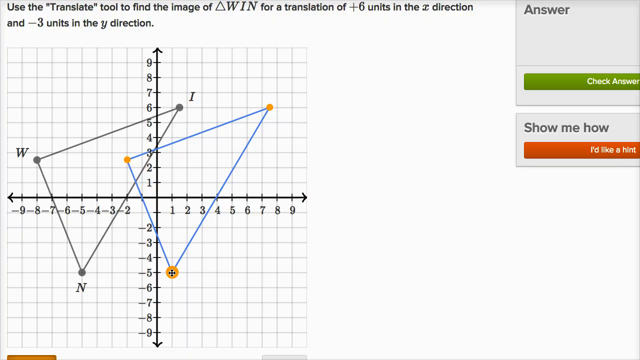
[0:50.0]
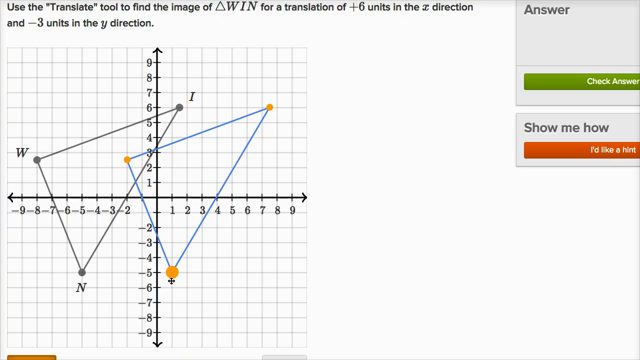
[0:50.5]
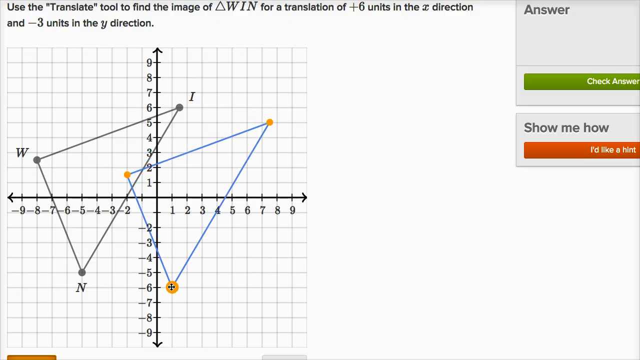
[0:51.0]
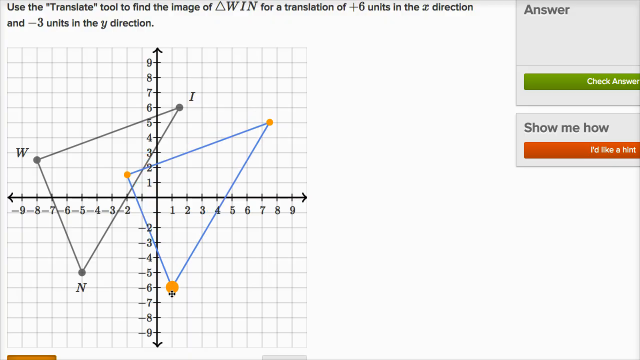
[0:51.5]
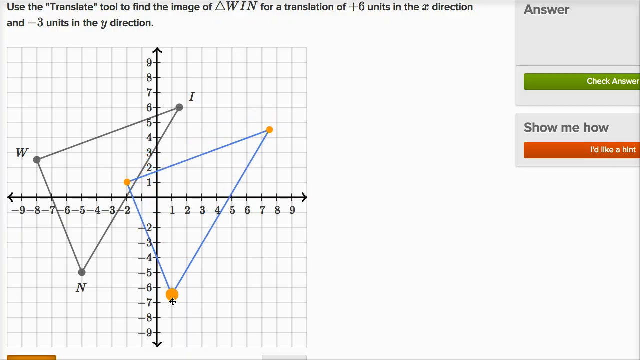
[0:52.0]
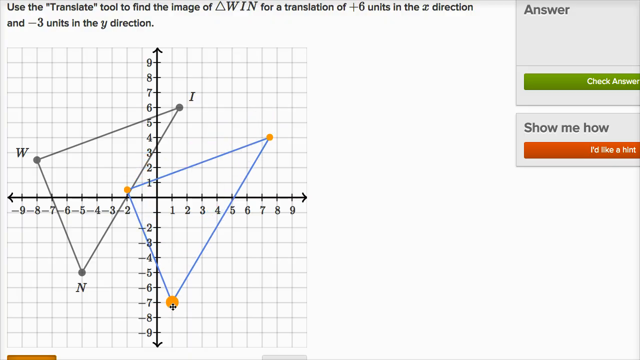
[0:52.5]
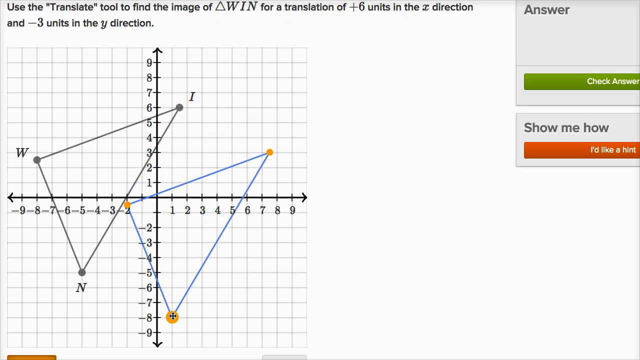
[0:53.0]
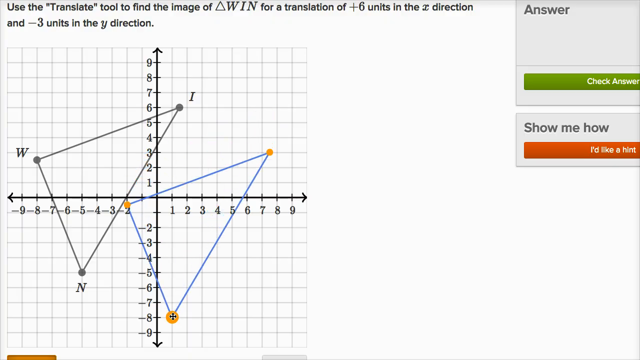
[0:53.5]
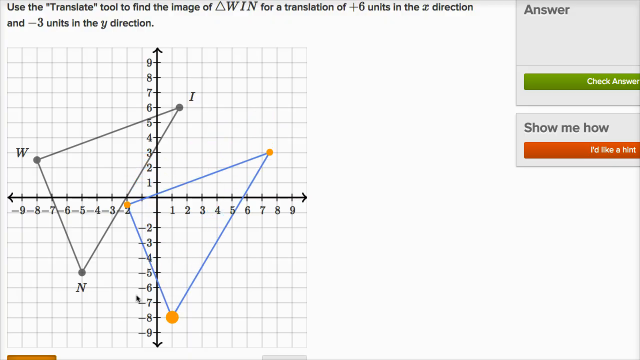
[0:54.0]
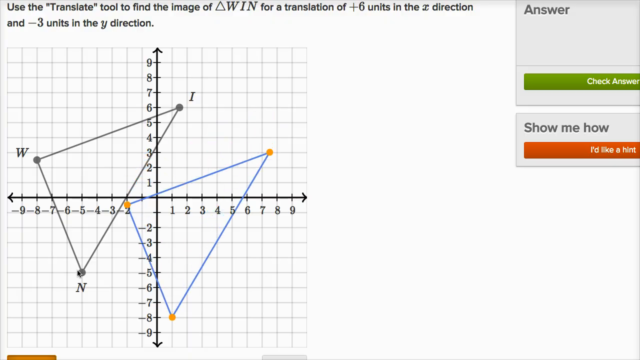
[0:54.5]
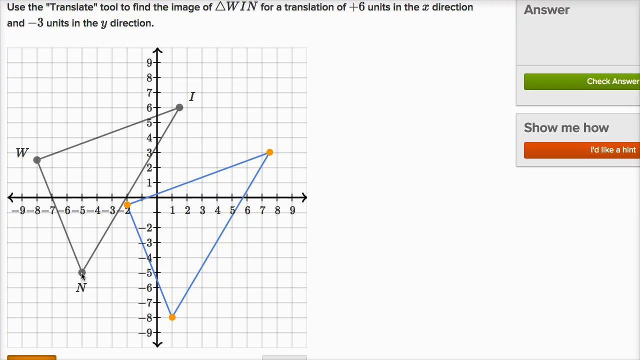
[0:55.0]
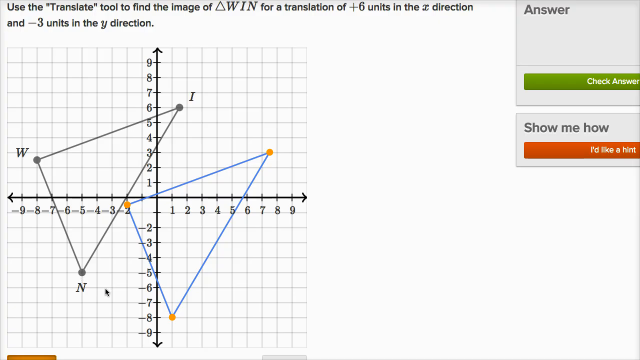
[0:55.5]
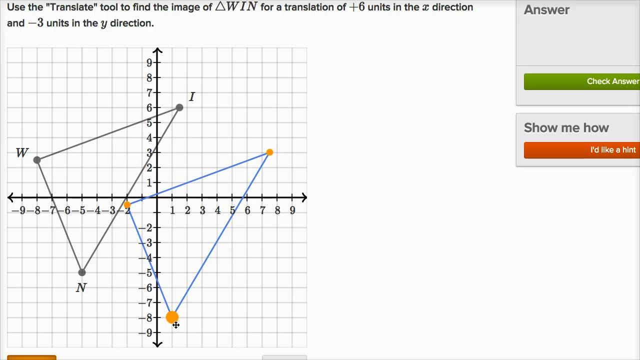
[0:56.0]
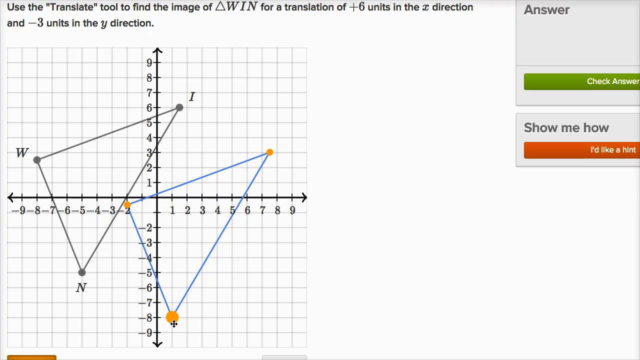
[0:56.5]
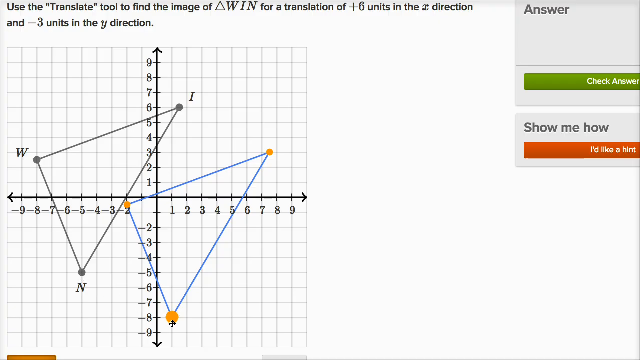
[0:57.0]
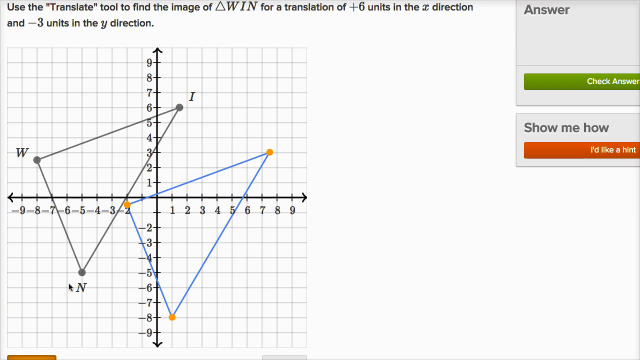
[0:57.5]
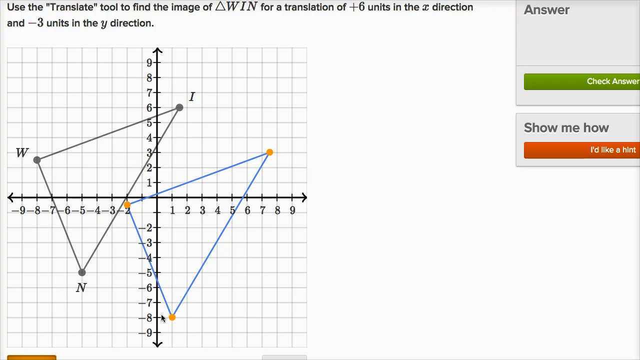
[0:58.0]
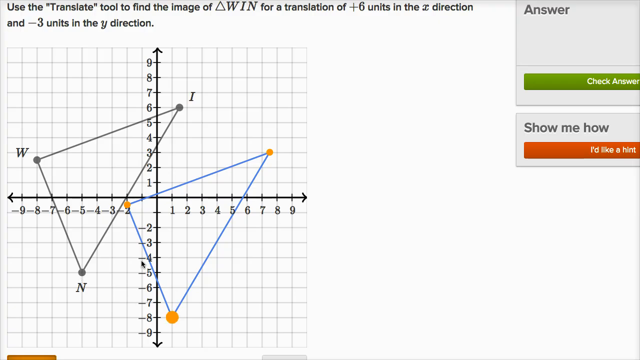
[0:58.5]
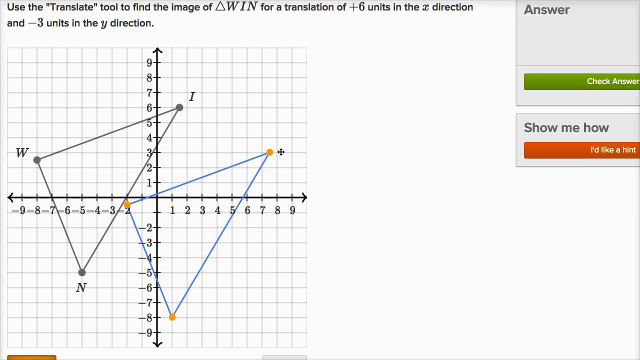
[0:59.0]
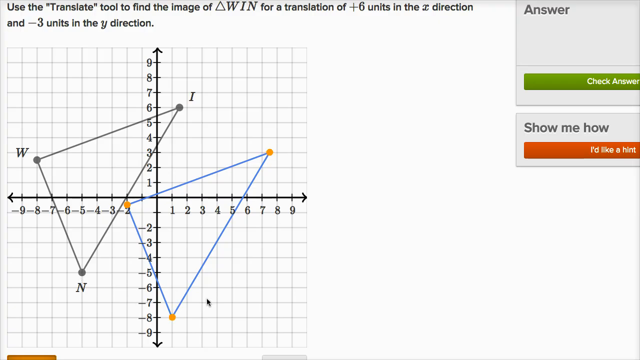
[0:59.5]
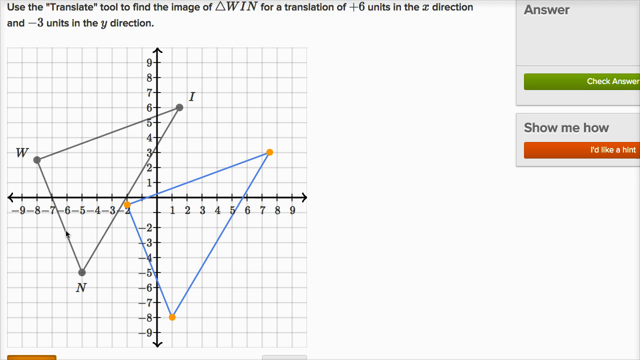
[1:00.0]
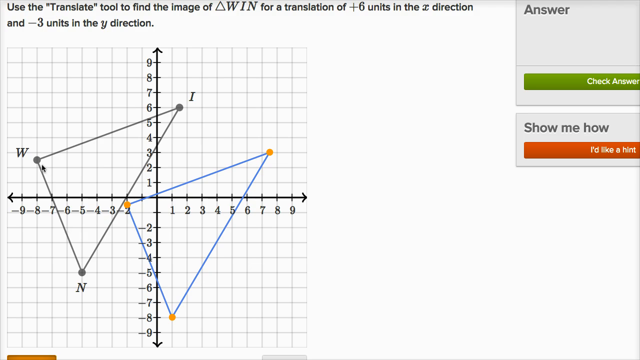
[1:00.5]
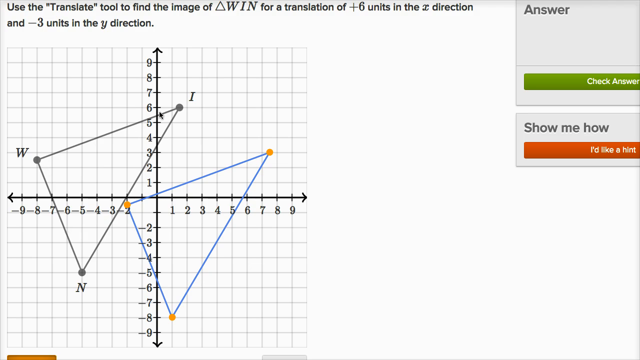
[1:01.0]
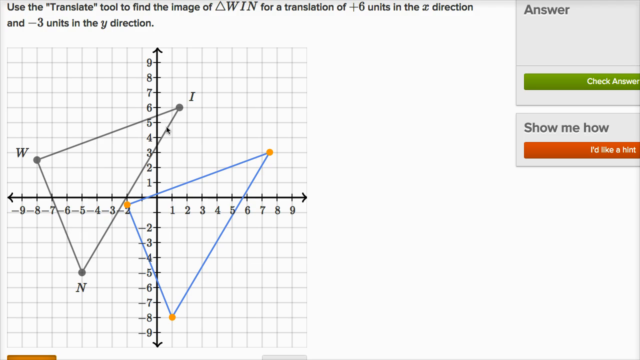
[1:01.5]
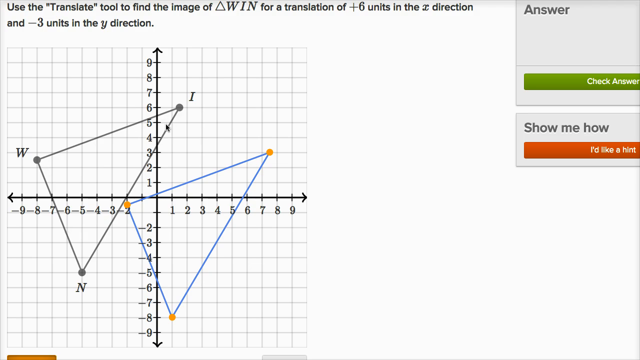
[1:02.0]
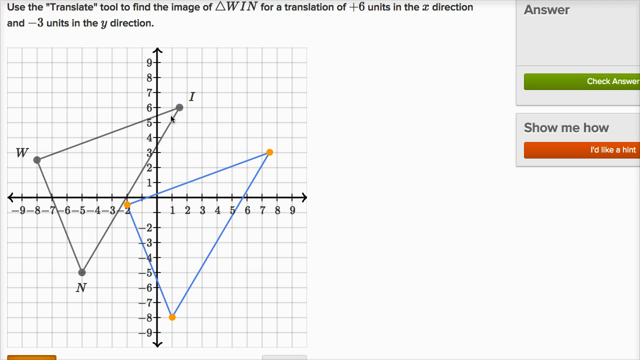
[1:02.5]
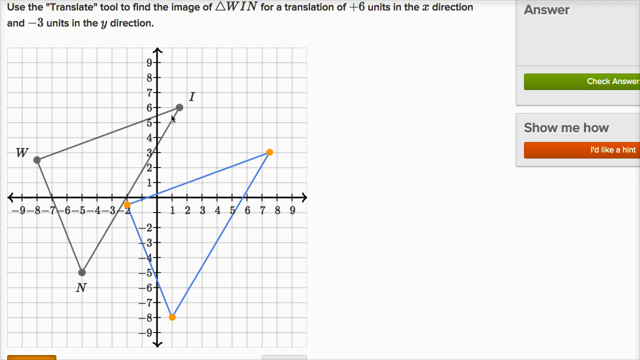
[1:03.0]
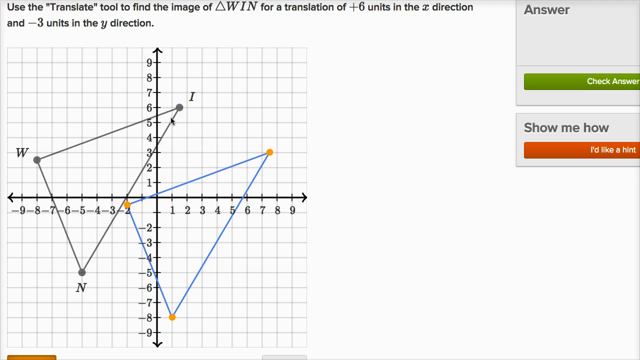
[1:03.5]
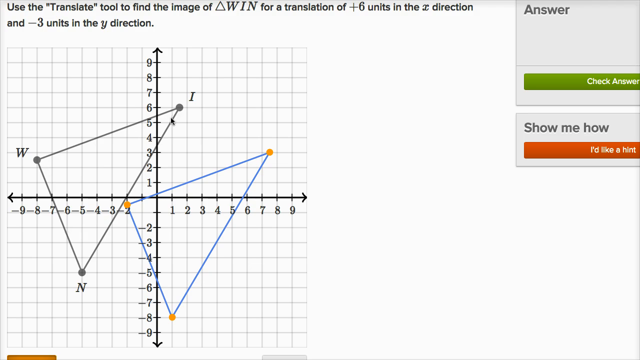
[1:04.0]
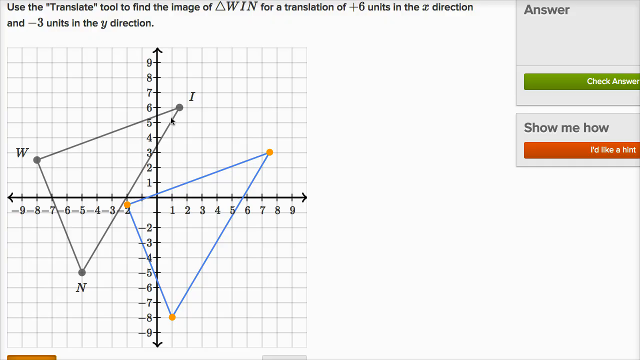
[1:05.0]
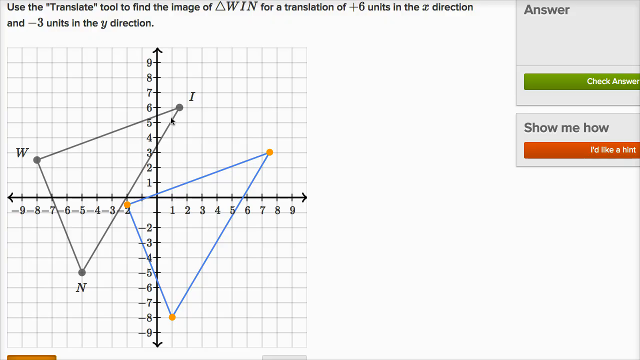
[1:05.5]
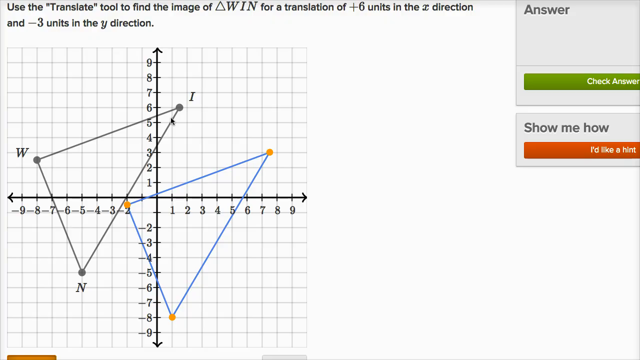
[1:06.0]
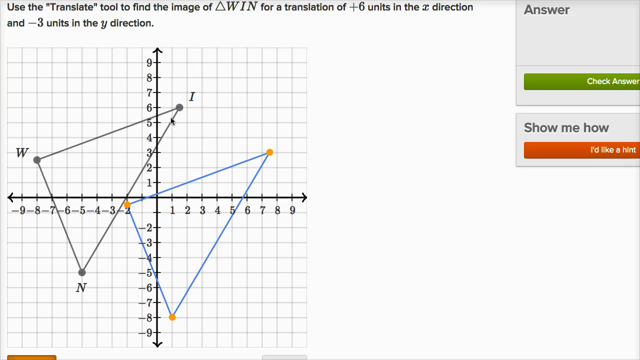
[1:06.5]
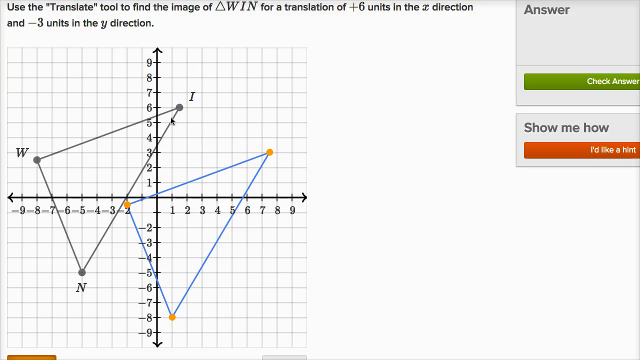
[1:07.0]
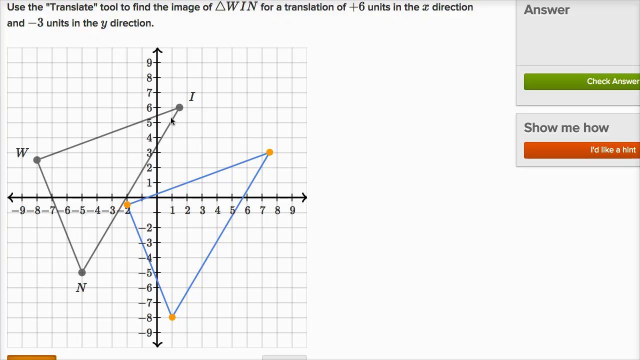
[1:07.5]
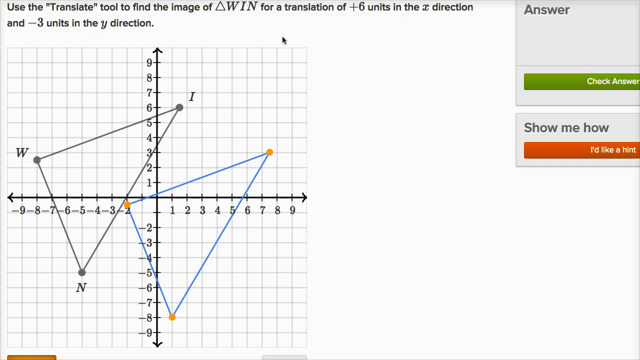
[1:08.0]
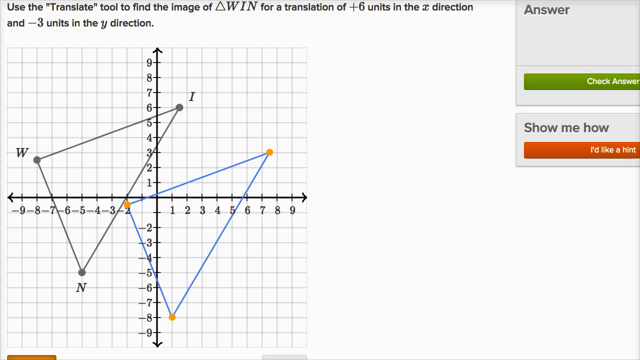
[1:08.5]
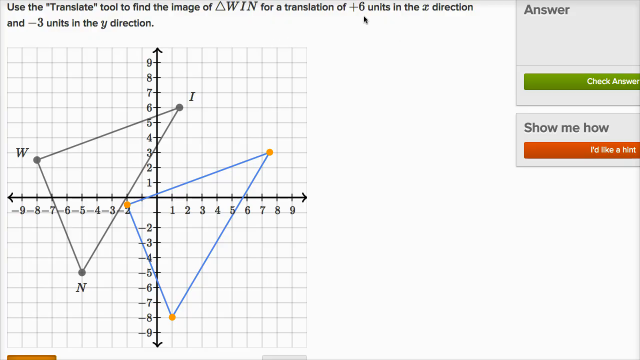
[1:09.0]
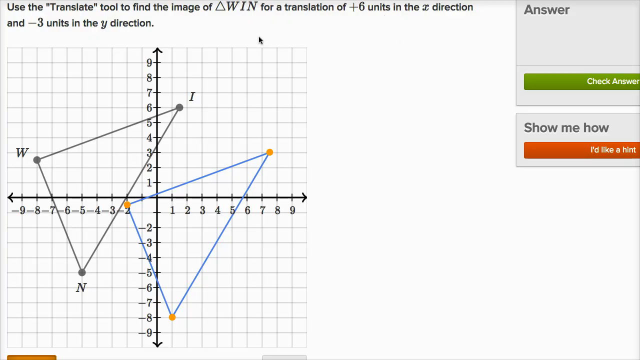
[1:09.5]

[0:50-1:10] The triangle is dragged all the way to the right, and then begins to be moved down. The question says plus 6 in the x direction and negative 3 in the y direction. The dragging stops, and the mouse moves over the plus 6 and near the negative 3. Finally the mouse moves over the question once more, showing plus six and negative three.